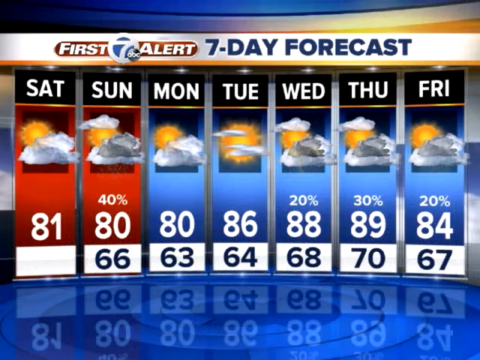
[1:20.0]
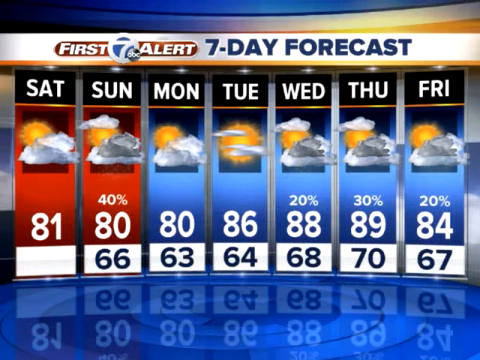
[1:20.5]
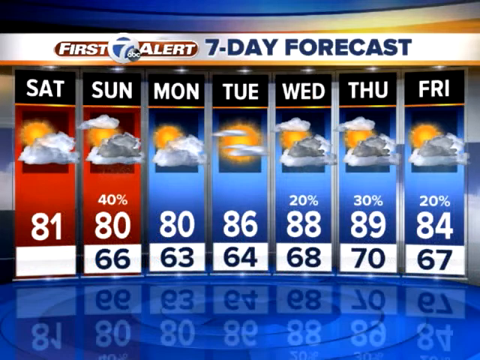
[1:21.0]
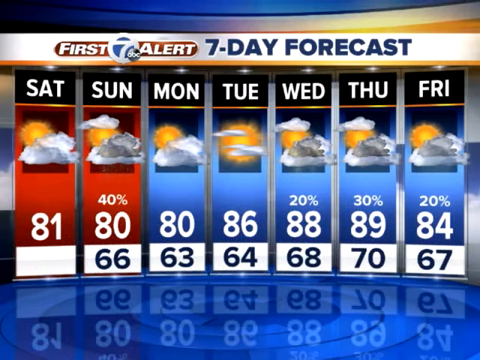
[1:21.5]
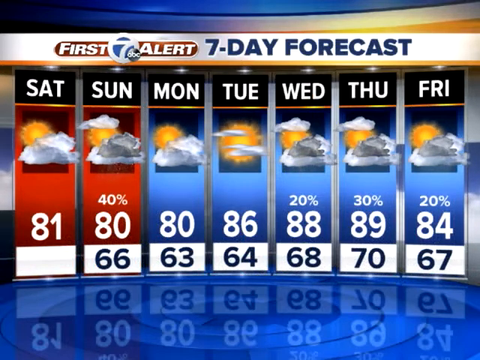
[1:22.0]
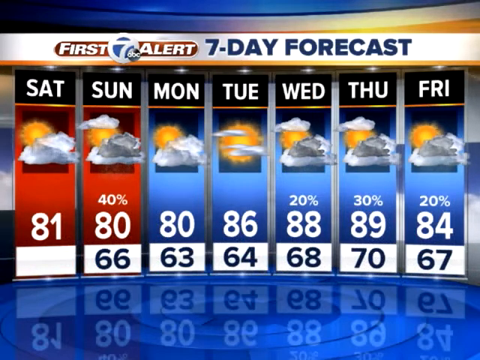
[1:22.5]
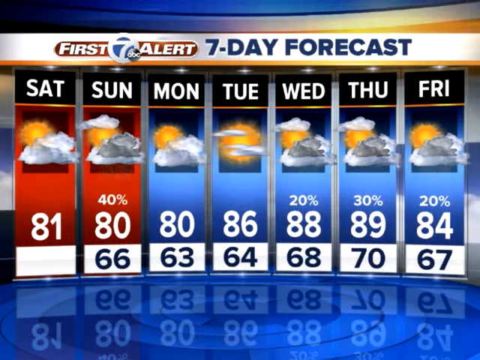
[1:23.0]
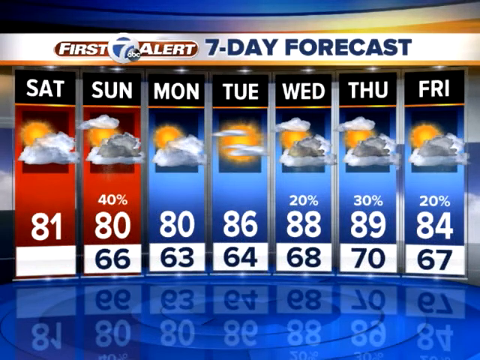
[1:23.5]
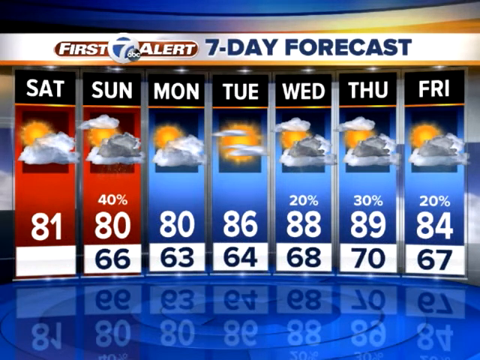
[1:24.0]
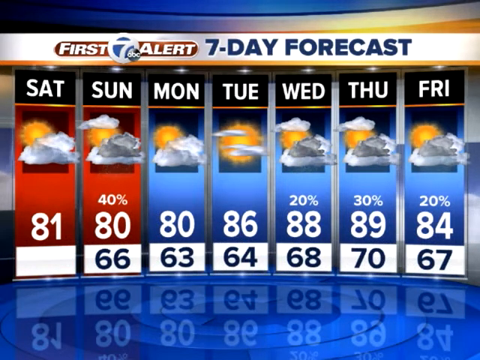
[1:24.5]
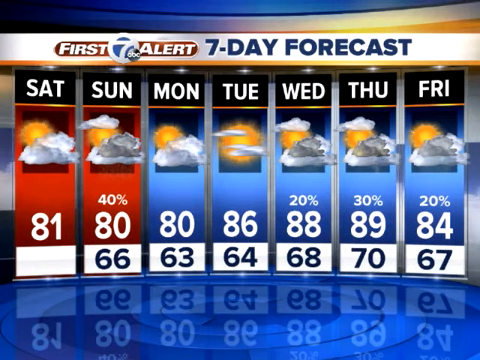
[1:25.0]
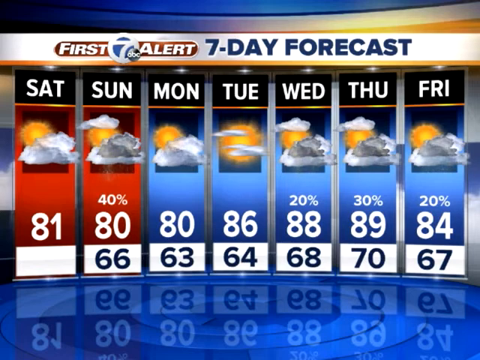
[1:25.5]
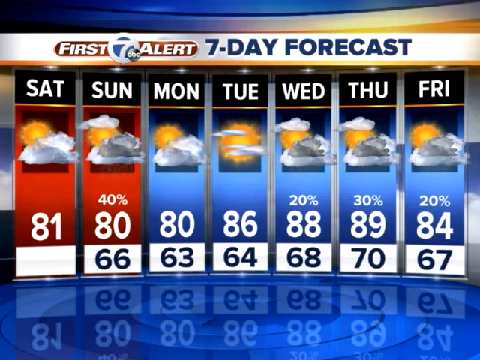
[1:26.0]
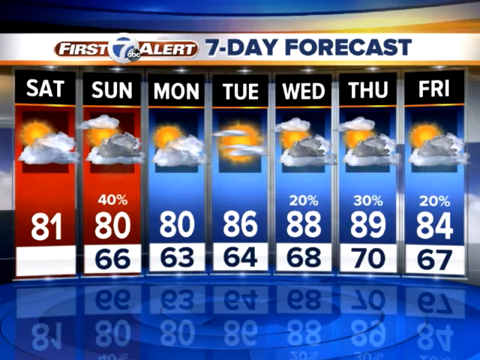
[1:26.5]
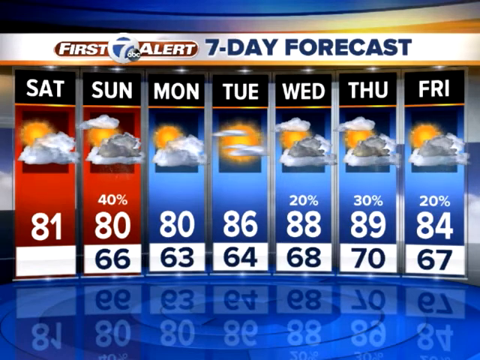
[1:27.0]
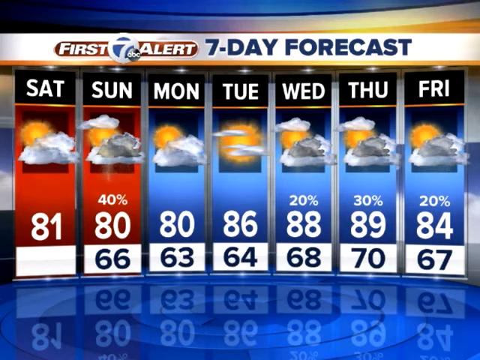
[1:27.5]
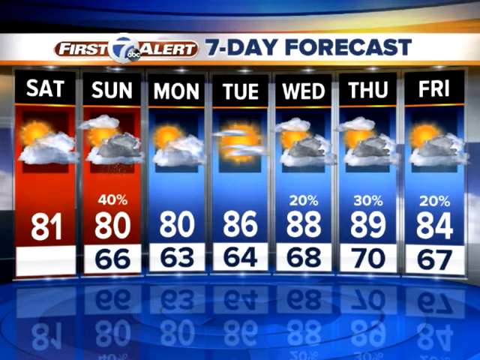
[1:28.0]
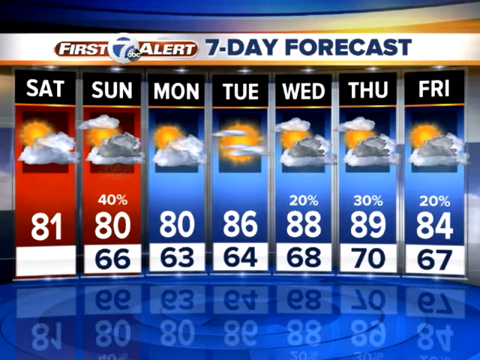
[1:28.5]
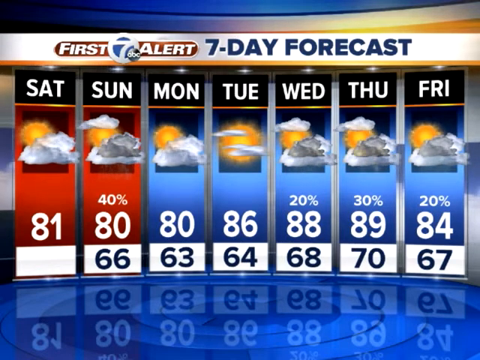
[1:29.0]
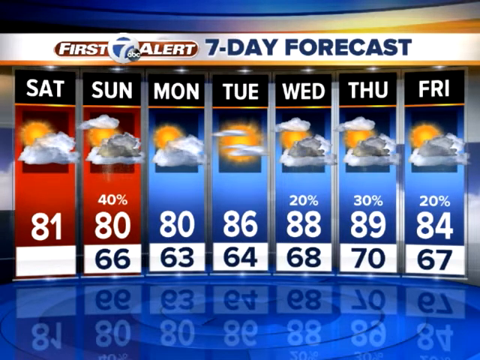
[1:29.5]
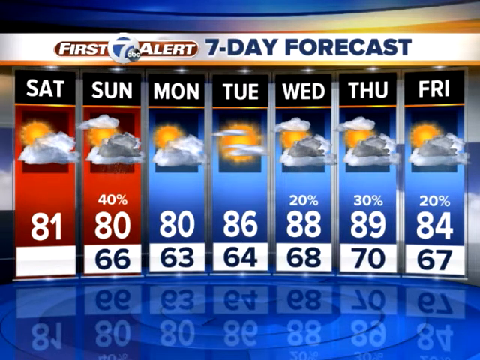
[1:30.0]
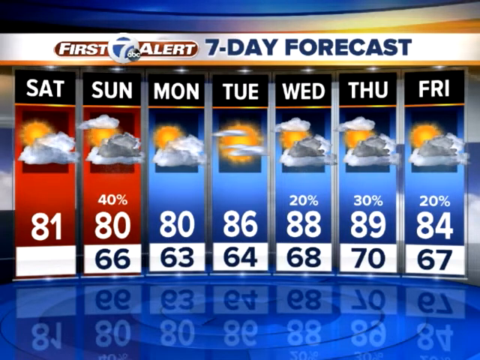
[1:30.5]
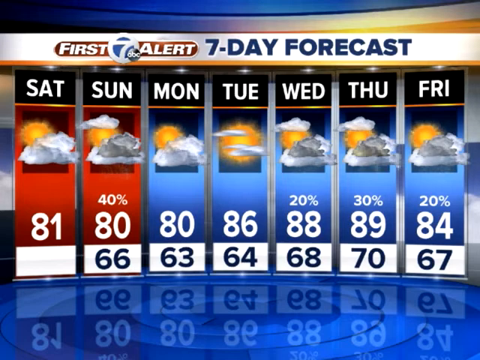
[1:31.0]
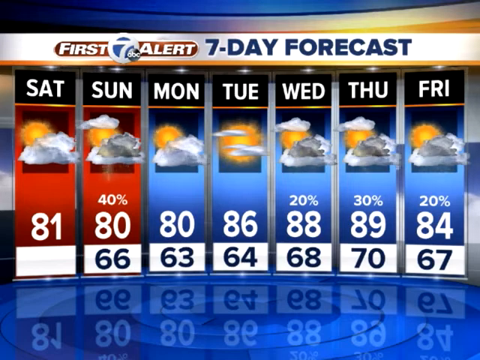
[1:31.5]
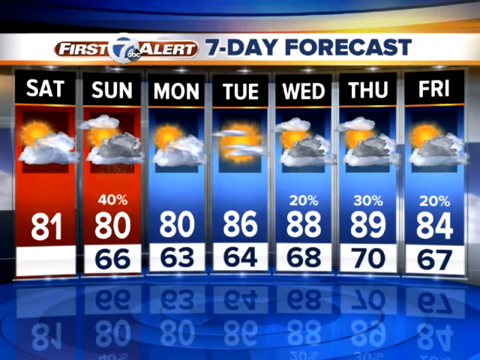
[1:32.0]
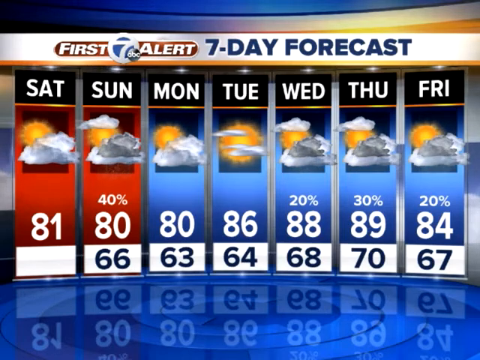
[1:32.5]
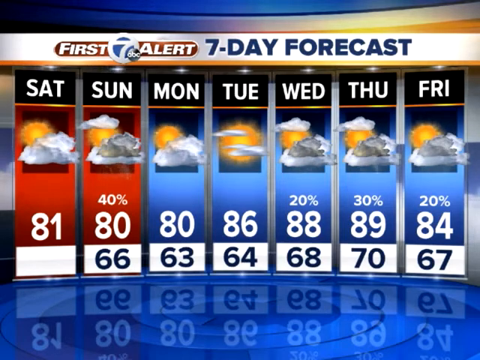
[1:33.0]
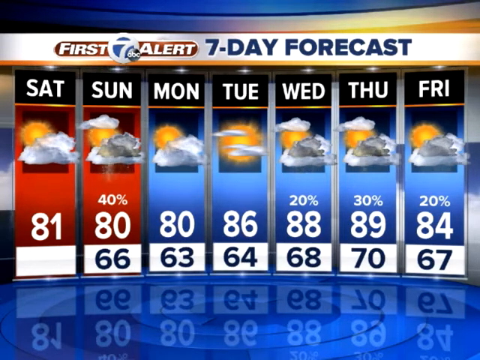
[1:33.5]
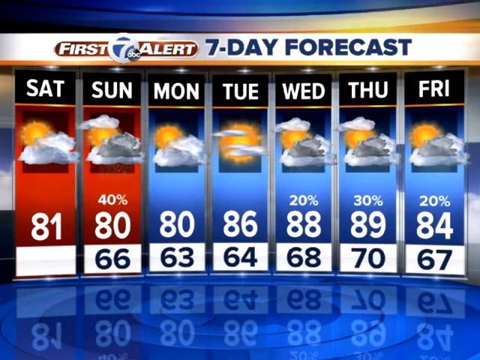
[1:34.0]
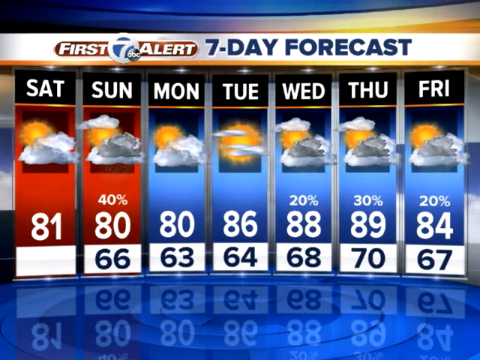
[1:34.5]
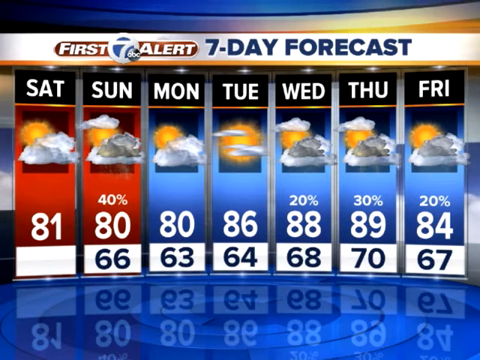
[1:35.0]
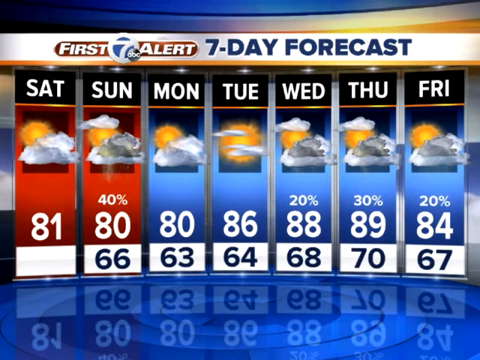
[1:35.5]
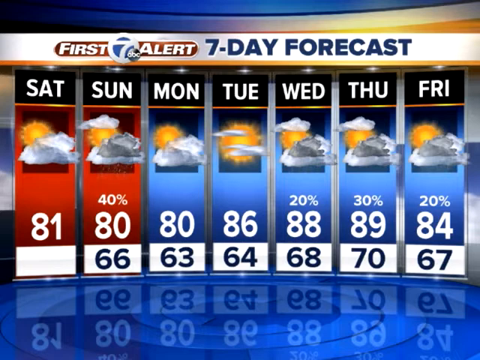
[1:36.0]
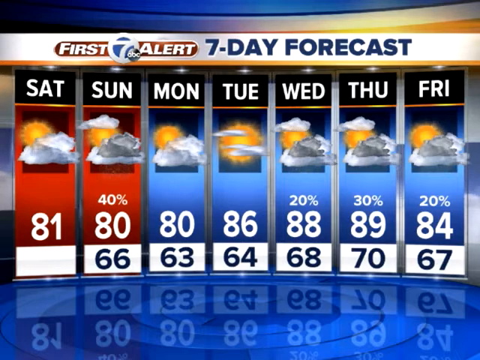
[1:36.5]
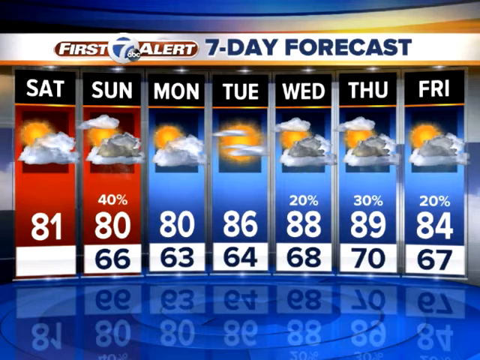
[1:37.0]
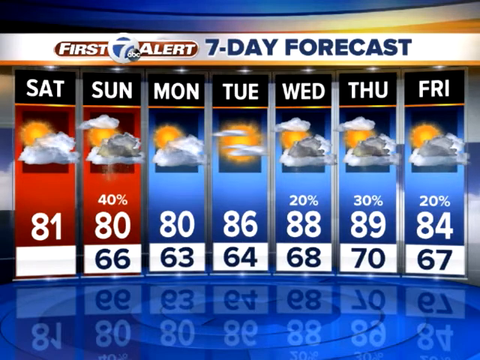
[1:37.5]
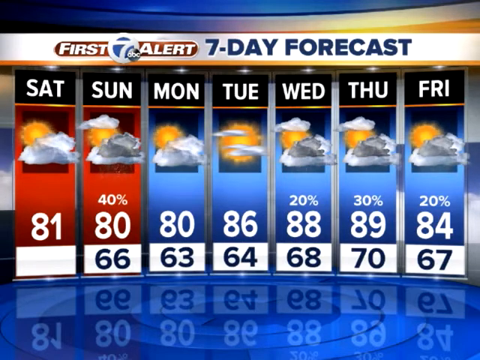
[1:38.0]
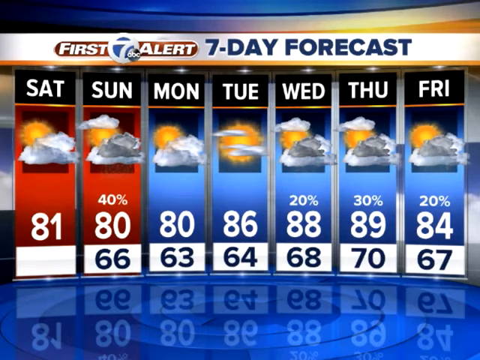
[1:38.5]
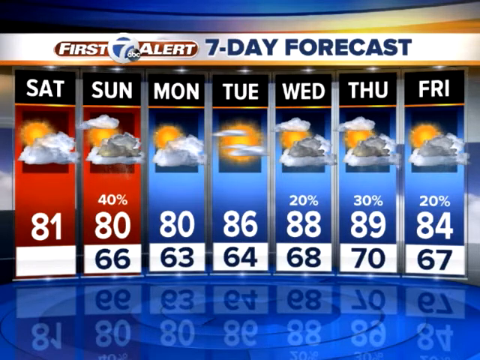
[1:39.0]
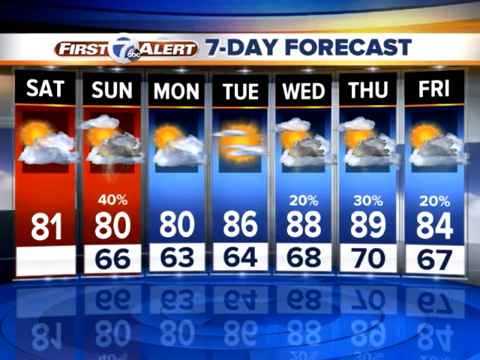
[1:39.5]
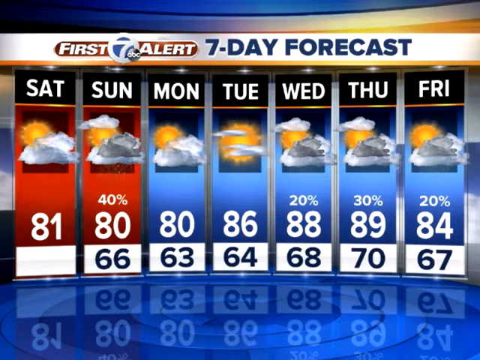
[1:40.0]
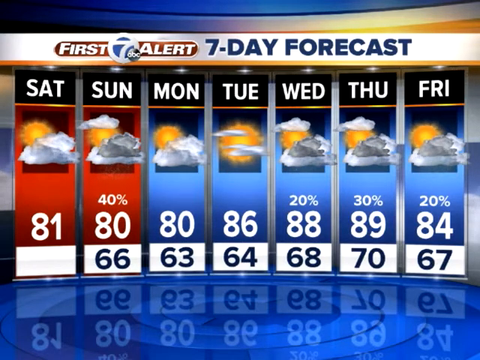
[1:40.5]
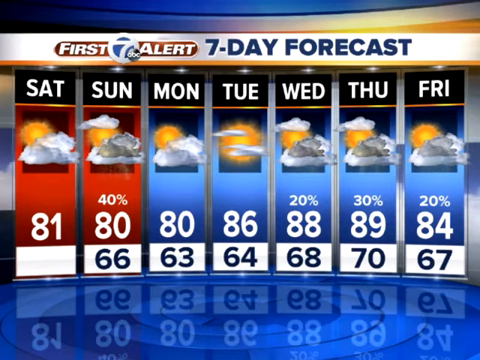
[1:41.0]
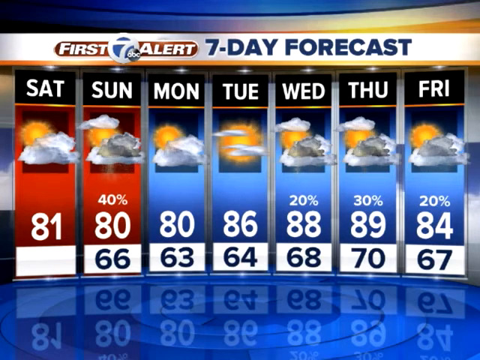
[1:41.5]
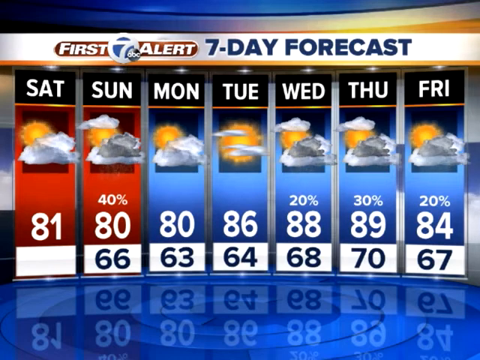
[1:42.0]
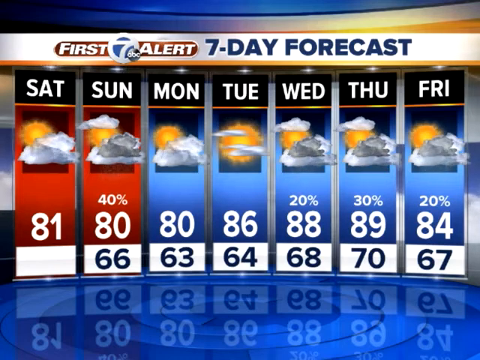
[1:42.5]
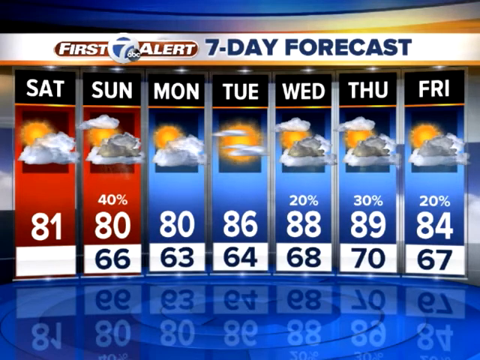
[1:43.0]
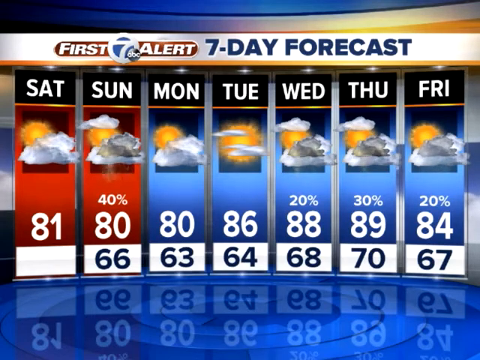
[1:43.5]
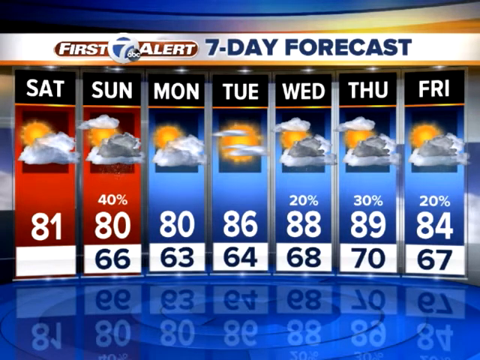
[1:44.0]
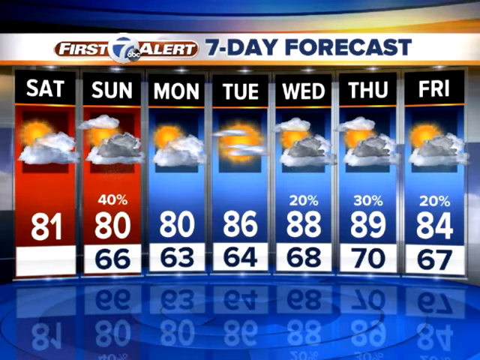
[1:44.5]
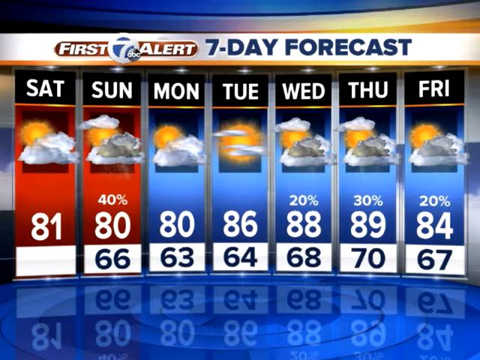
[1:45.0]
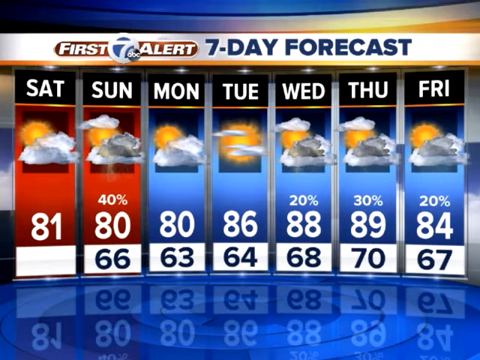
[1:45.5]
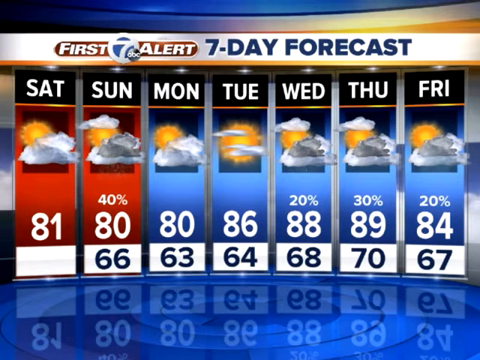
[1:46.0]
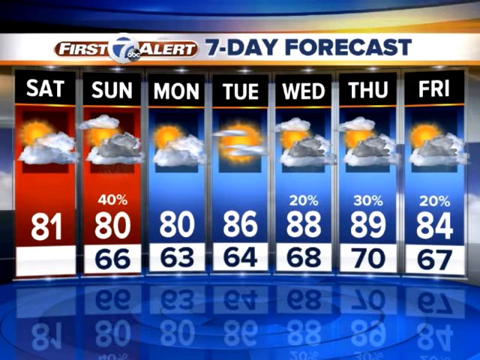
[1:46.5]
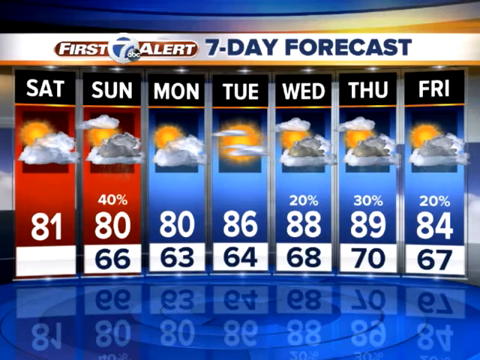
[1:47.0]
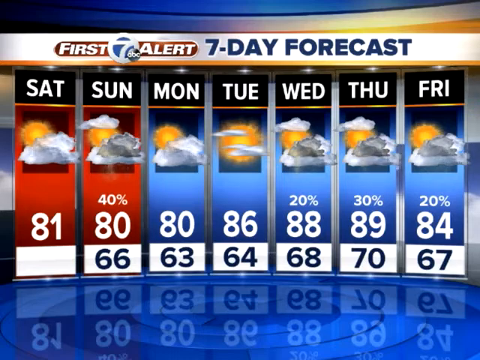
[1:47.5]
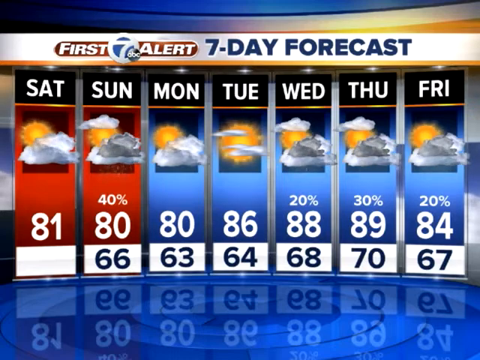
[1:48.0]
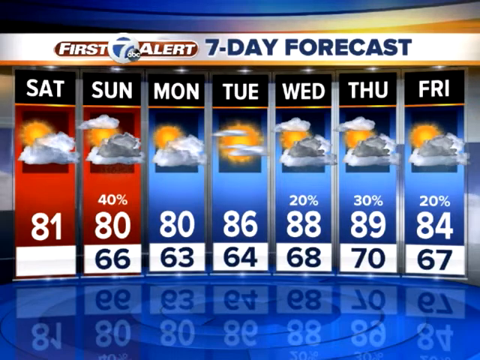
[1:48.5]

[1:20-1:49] A graphic has a header reading "First Alert 7" with an ABC logo, and next to it blue text reads "7-Day Forecast". Underneath is a forecast from Saturday through Friday, with each day in a column that also shows the temperature. The first two columns are red and the next five are blue. Saturday has a sun with clouds in the foreground, with "81" in white text underneath. Sunday has a sun with more clouds in front of it, with "40 percent" and 80 degrees underneath, and 66 degrees in blue text below that. Monday also has a sun with clouds in front of it, showing 80 degrees and 60 degrees underneath. Tuesday shows 86 degrees and 64 degrees; Wednesday shows 20 percent, 88 degrees, and 68 degrees; Thursday shows 30 percent, 89 degrees, and 70 degrees; and Friday shows 28 percent, 84 degrees, and 67 degrees. Suns with clouds in front of them also appear in the forecast.